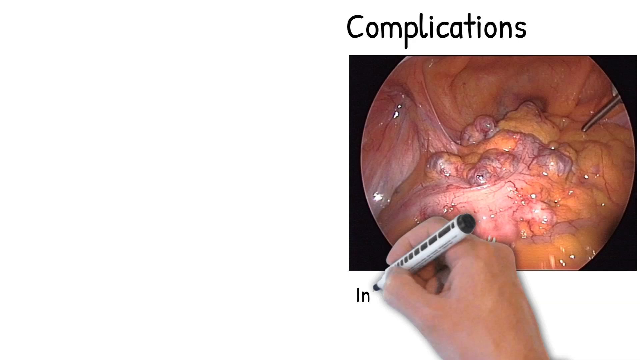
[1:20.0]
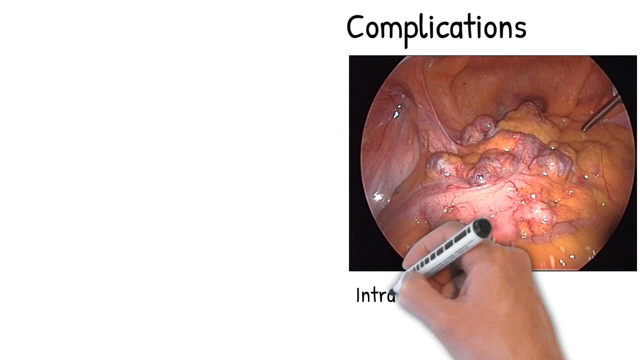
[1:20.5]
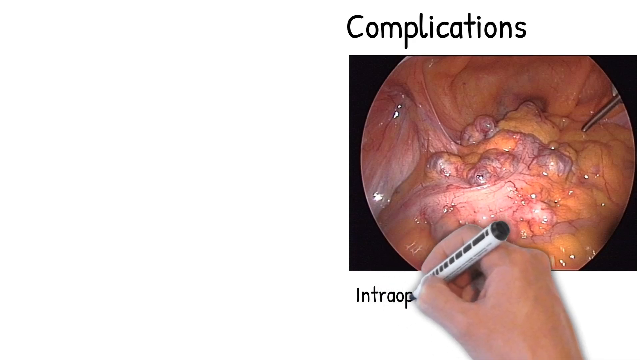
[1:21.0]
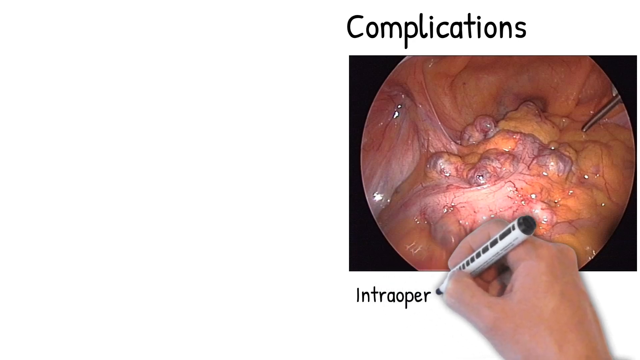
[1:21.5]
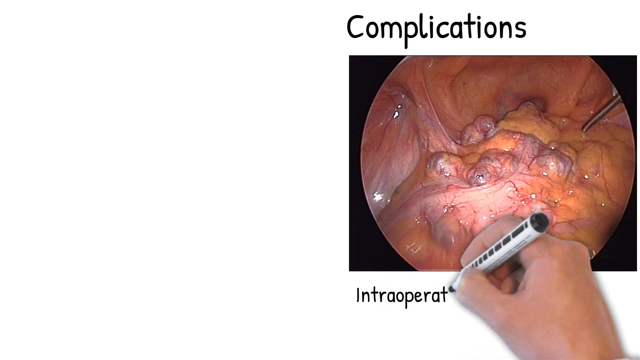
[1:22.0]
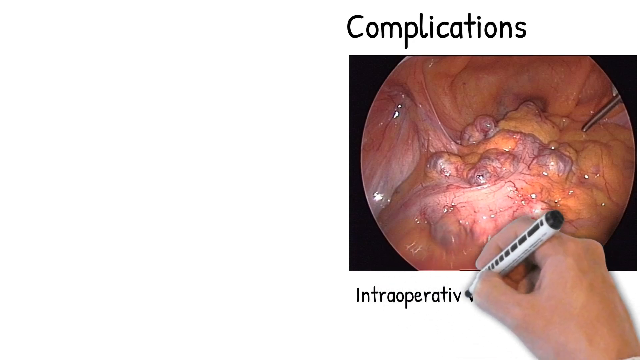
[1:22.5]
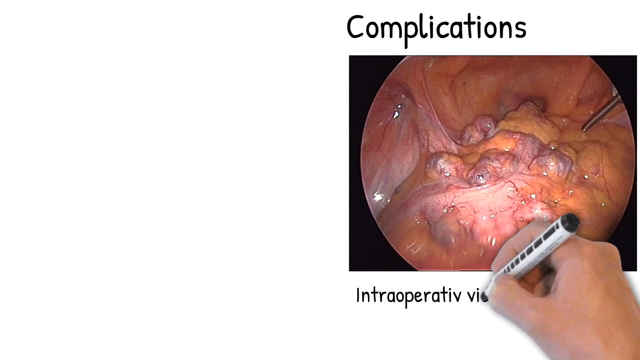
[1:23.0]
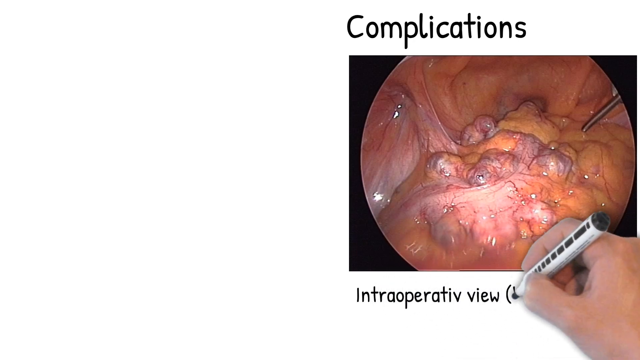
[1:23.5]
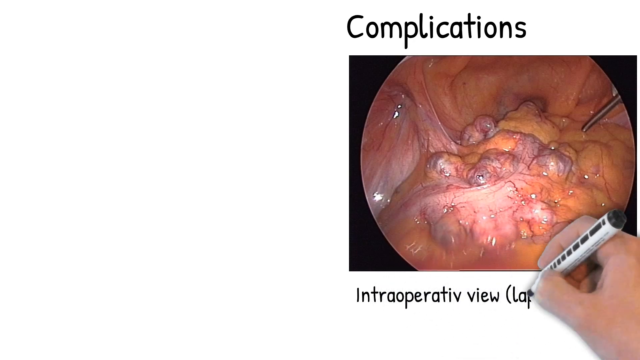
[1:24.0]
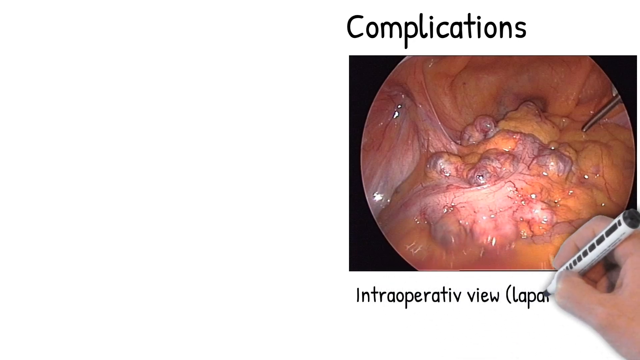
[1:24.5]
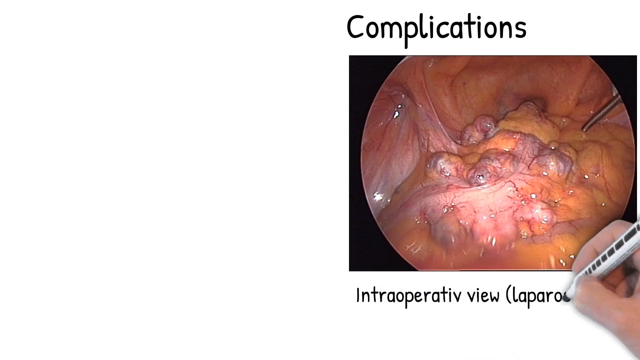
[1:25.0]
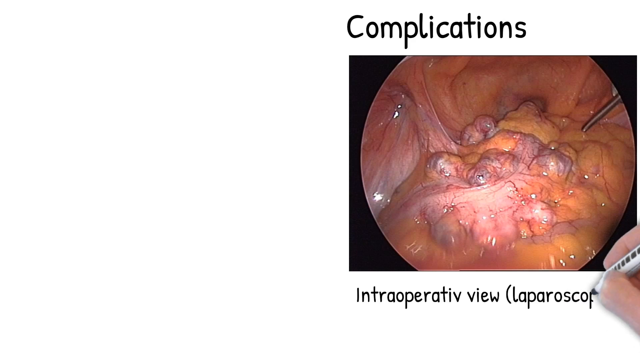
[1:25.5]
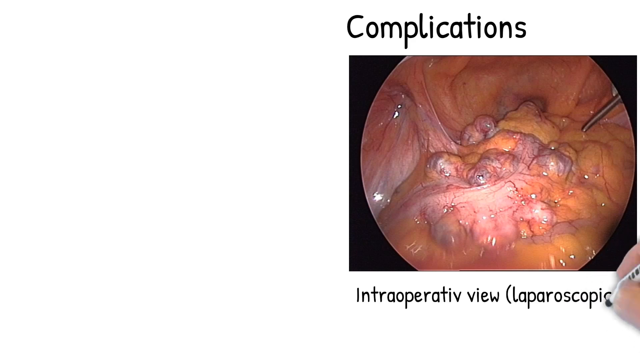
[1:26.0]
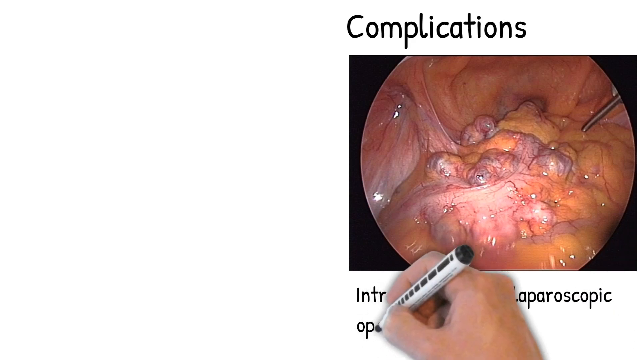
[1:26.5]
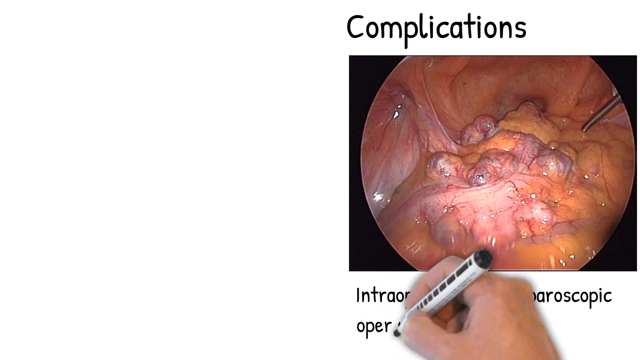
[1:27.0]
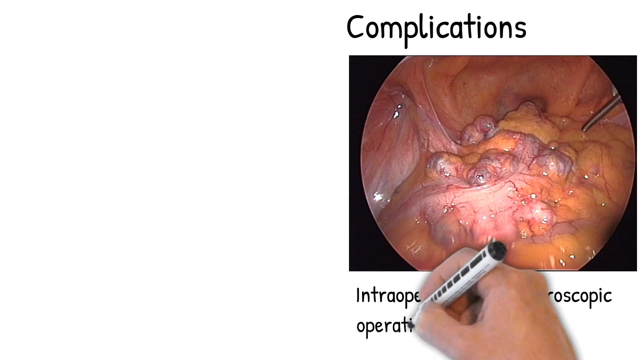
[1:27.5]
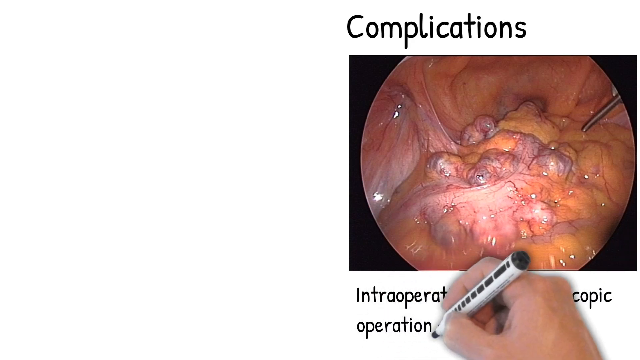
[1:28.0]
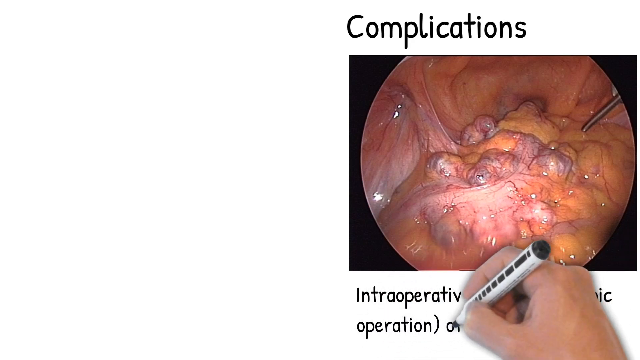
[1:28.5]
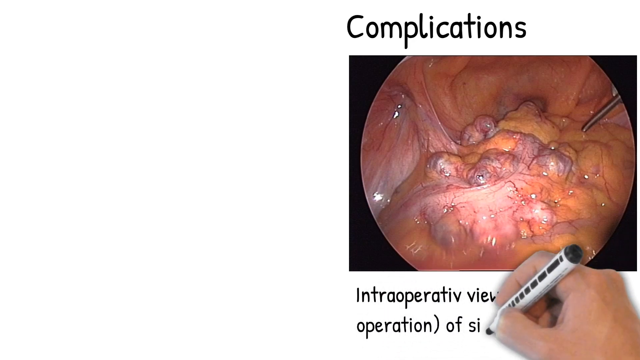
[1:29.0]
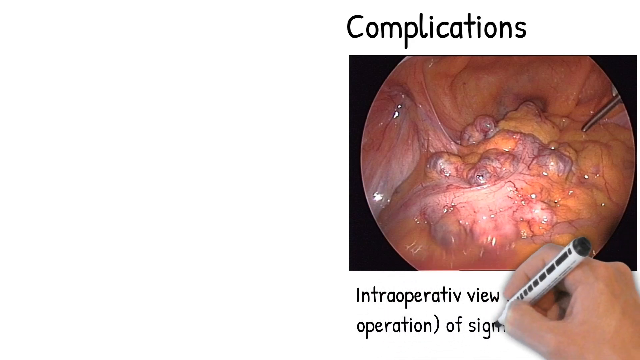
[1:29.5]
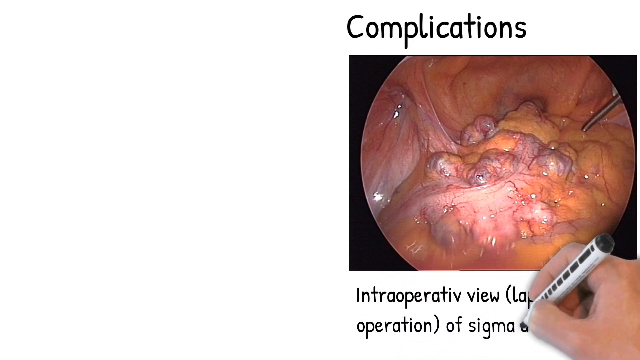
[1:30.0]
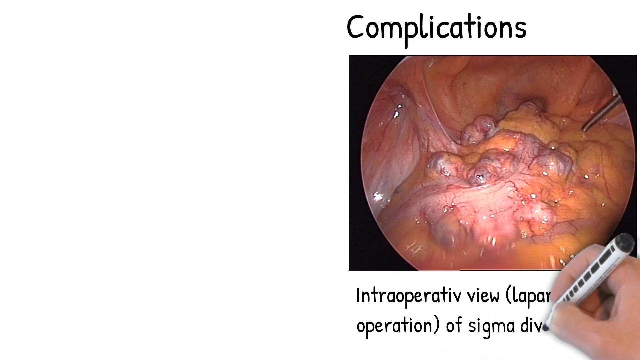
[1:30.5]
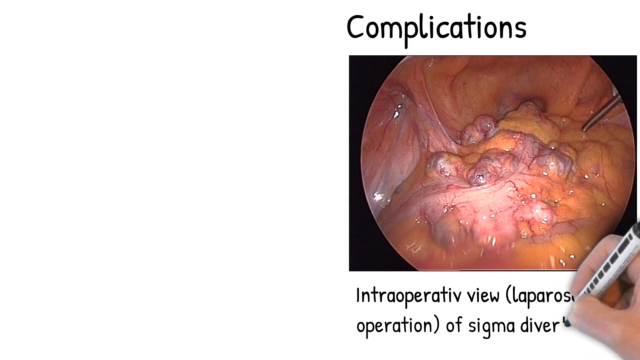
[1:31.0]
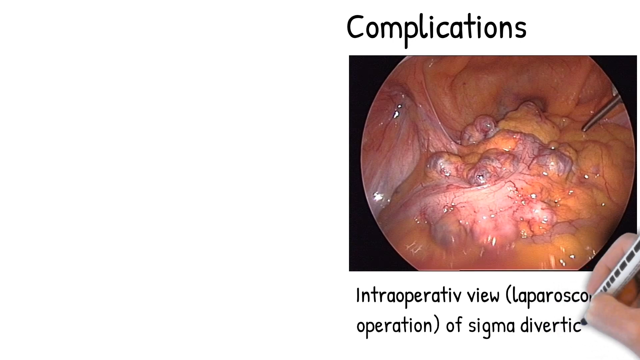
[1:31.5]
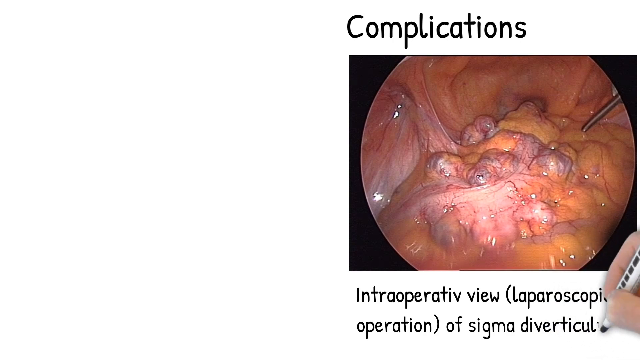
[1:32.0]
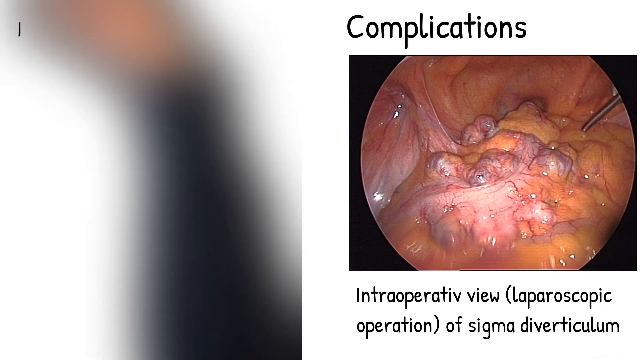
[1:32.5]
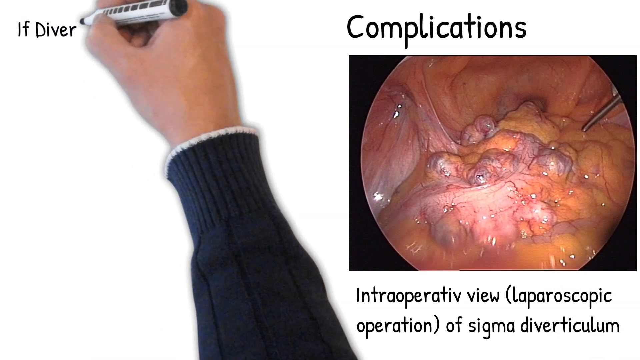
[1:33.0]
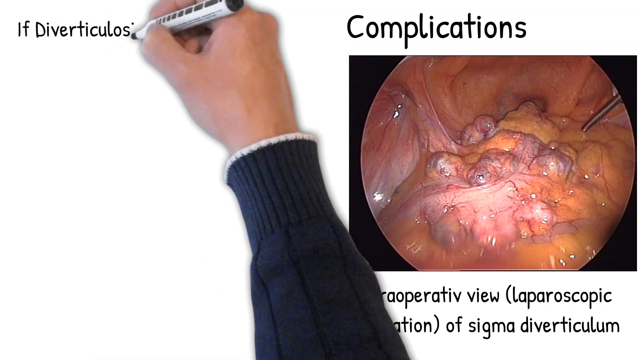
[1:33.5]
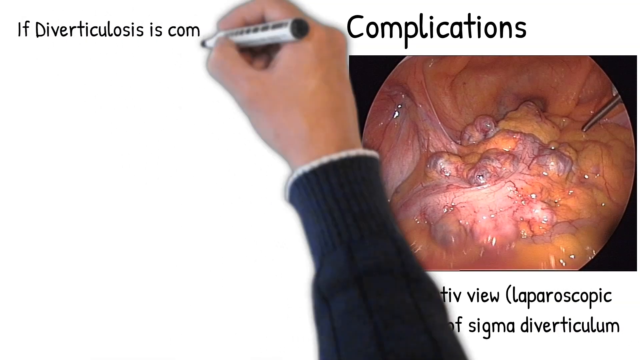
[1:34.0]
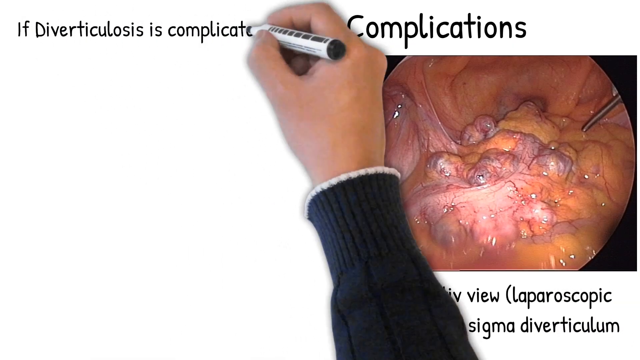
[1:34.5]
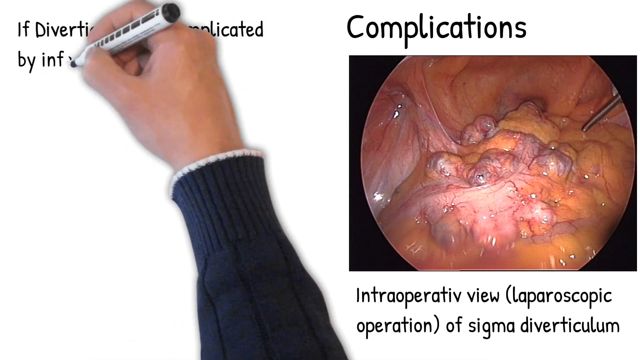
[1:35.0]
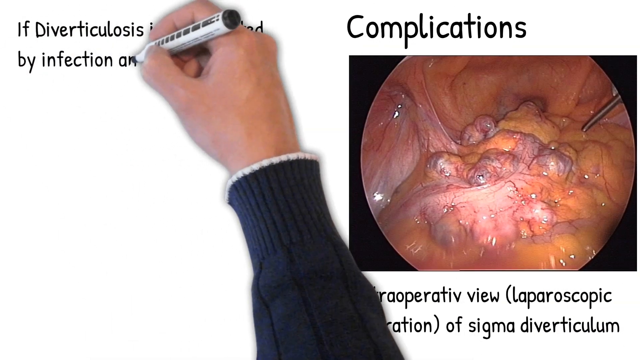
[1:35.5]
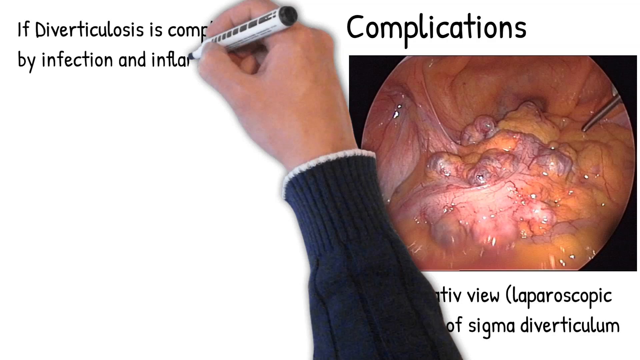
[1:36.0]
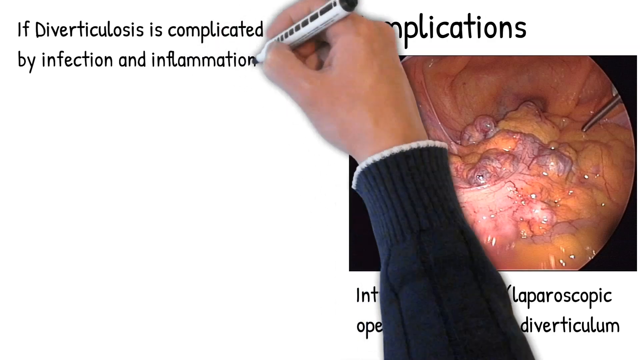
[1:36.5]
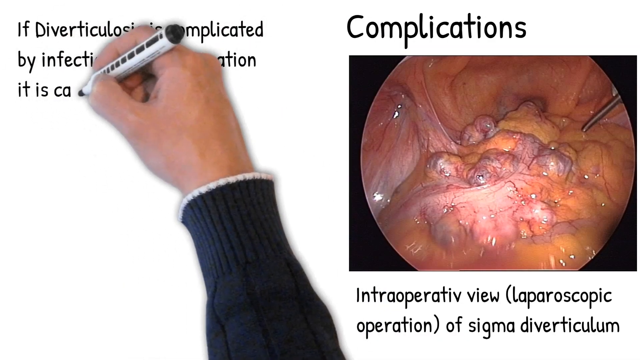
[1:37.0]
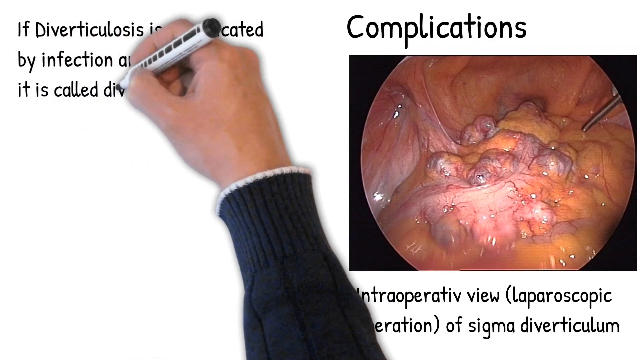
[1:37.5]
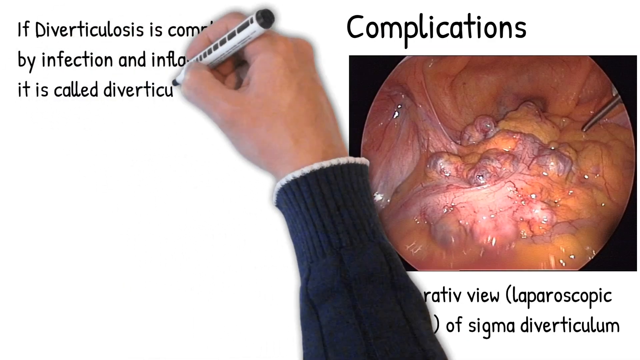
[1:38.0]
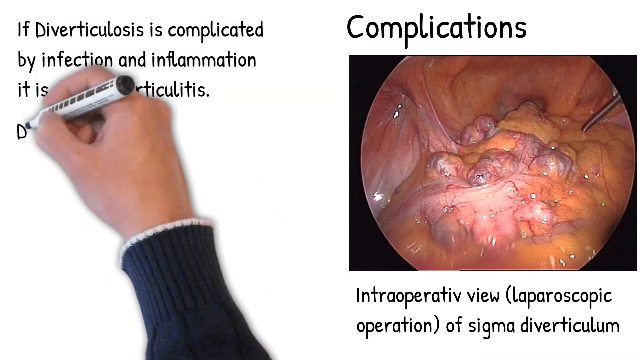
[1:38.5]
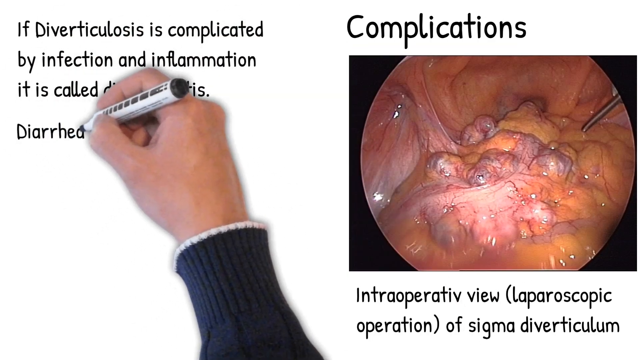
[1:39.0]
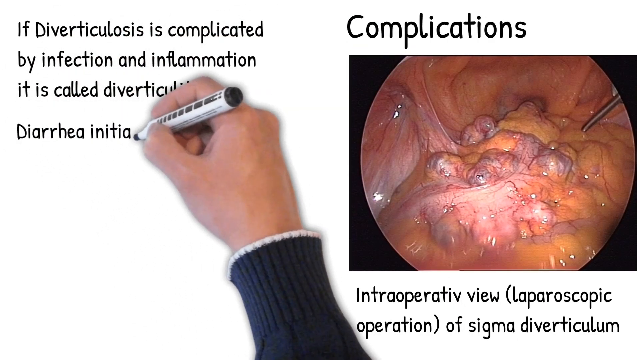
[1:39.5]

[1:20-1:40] The complications section continues with another endoscopy picture and the text "inoperative view, a laparoscopic operation of a sigma diverticulum." Text says that if diverticulitis is complicated by infection and inflammation, it is called diverticulitis. The background is still white, and the hand with the black sleeve continues writing and shading in to form the pictures.